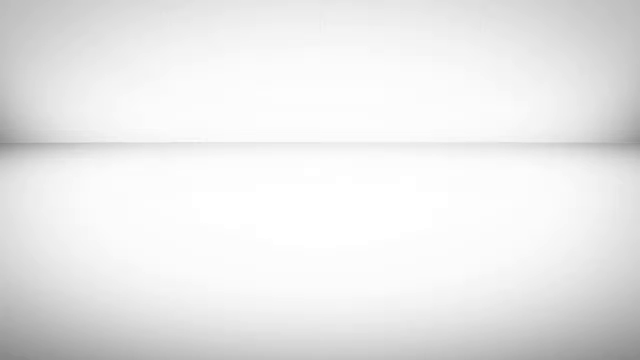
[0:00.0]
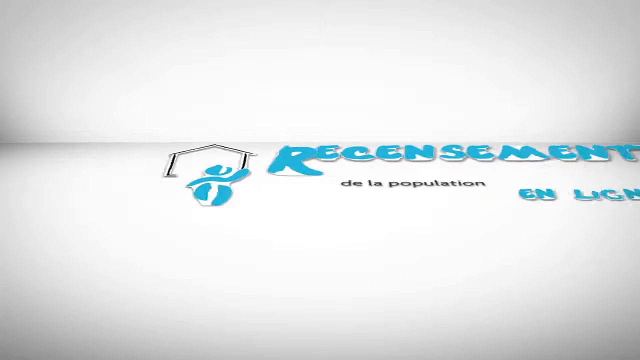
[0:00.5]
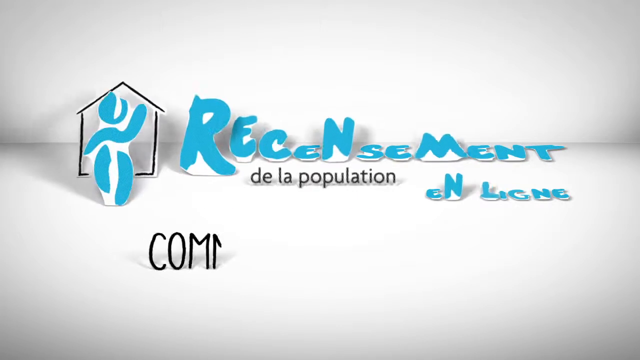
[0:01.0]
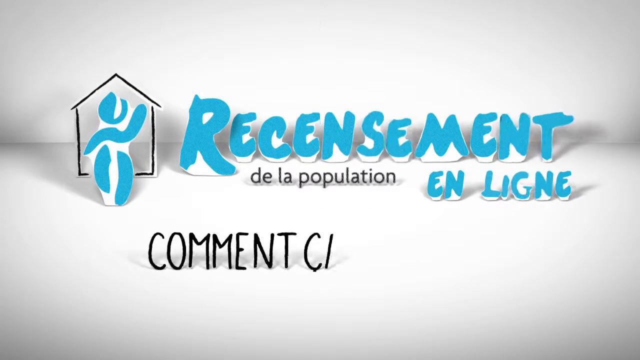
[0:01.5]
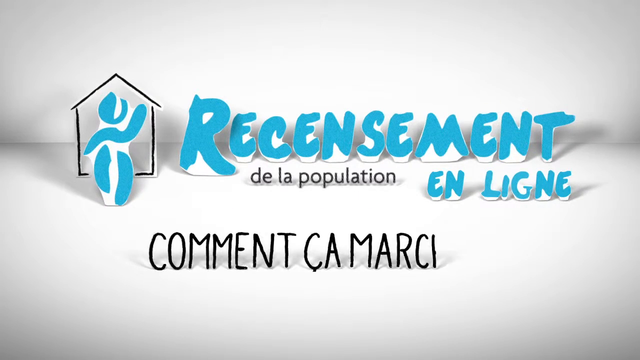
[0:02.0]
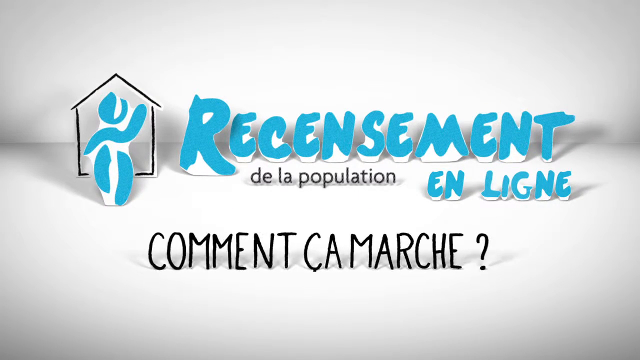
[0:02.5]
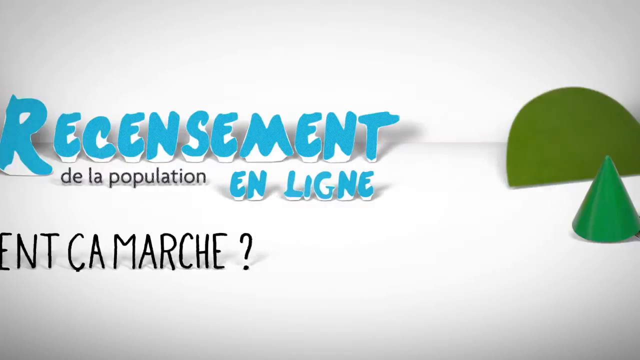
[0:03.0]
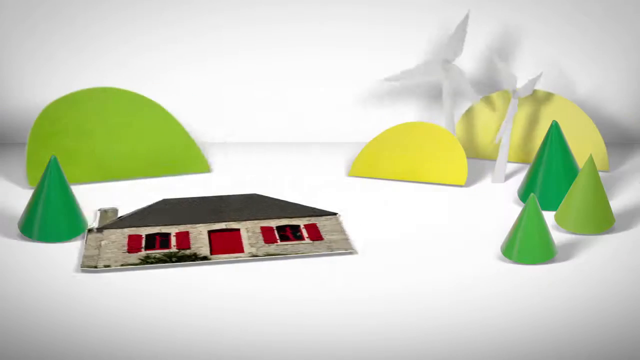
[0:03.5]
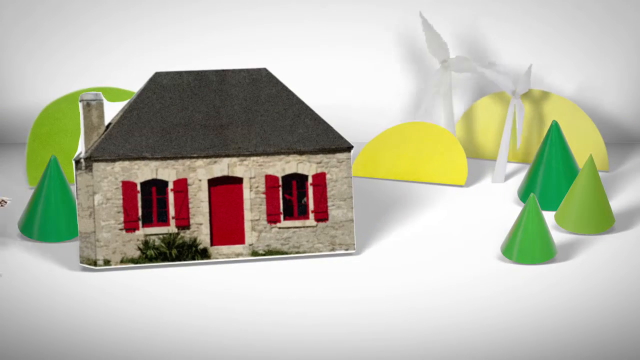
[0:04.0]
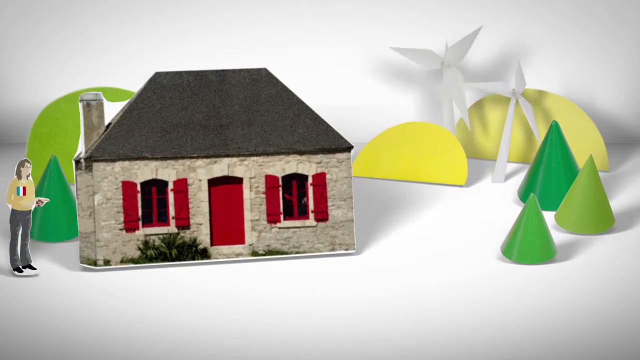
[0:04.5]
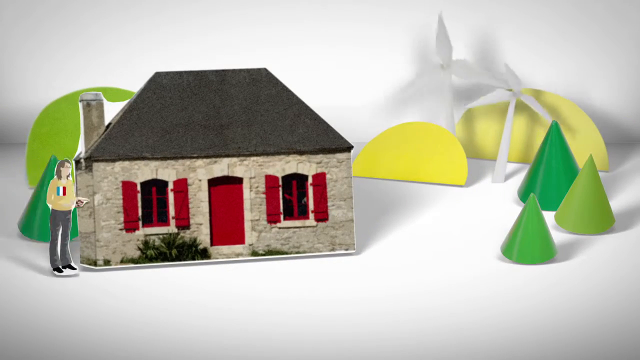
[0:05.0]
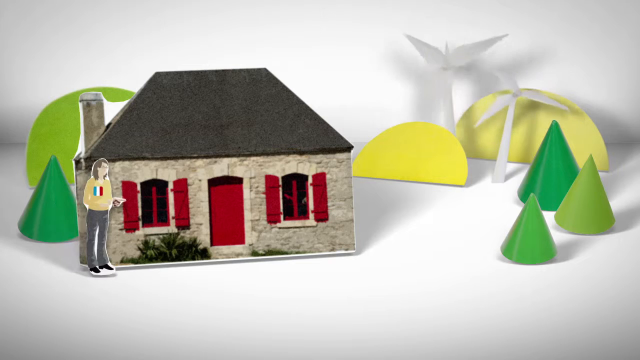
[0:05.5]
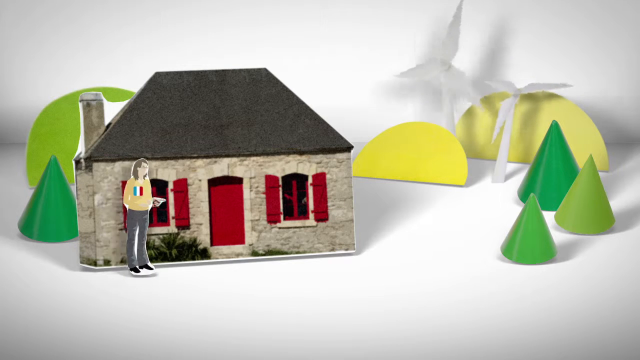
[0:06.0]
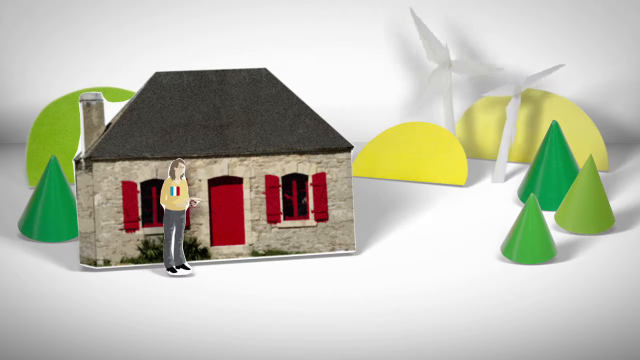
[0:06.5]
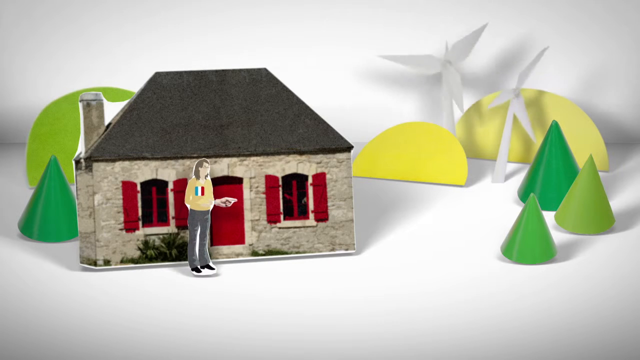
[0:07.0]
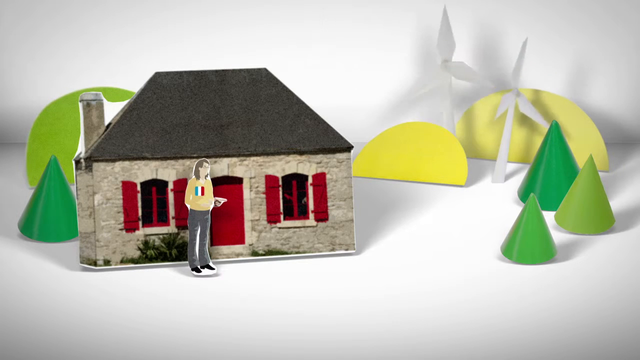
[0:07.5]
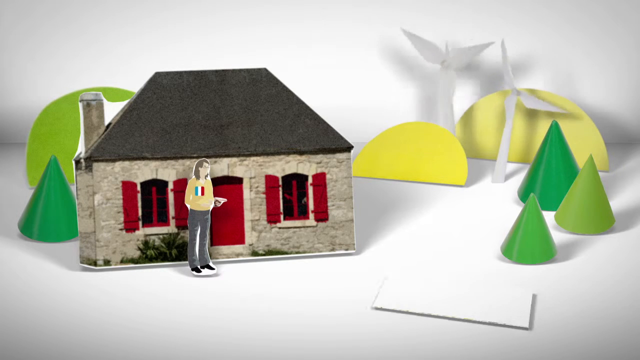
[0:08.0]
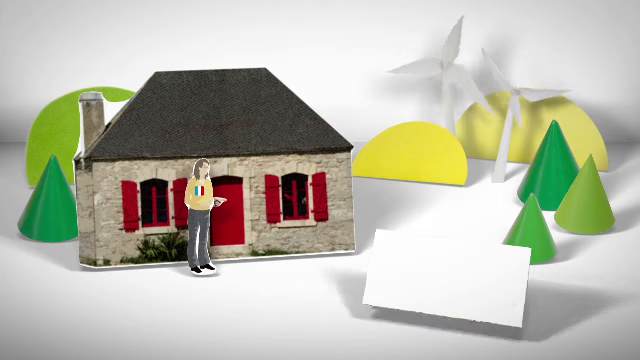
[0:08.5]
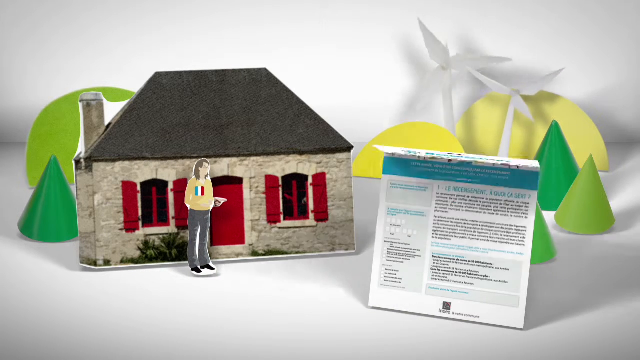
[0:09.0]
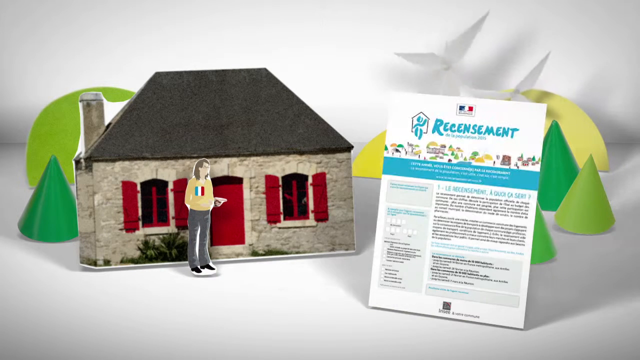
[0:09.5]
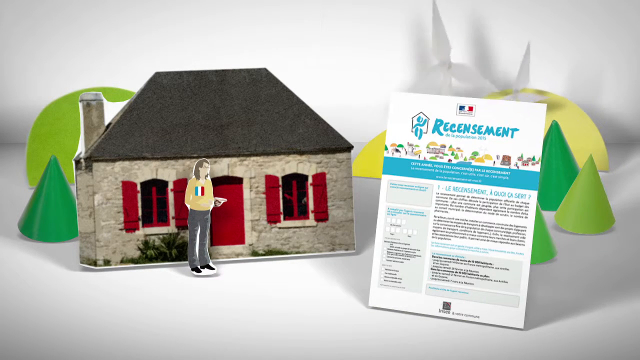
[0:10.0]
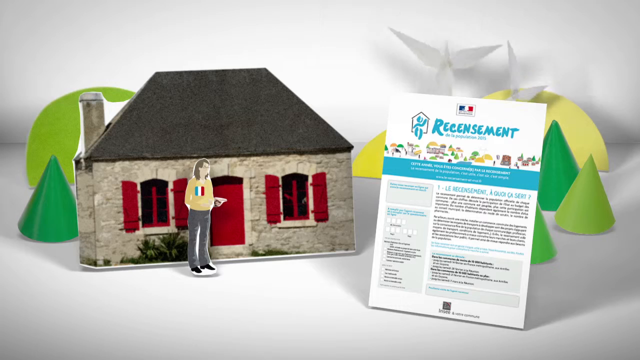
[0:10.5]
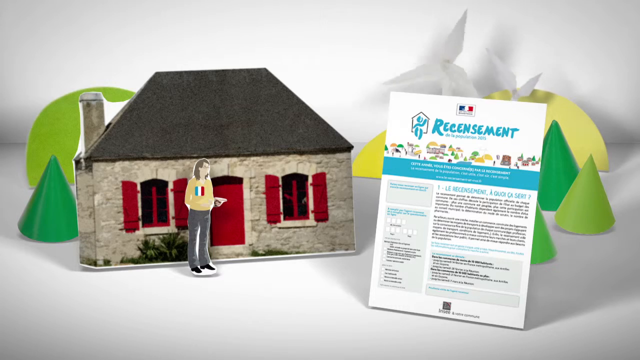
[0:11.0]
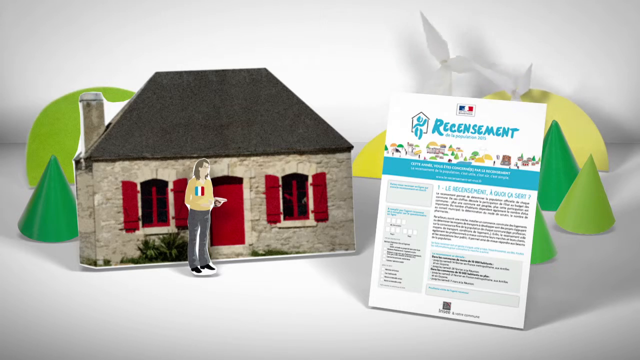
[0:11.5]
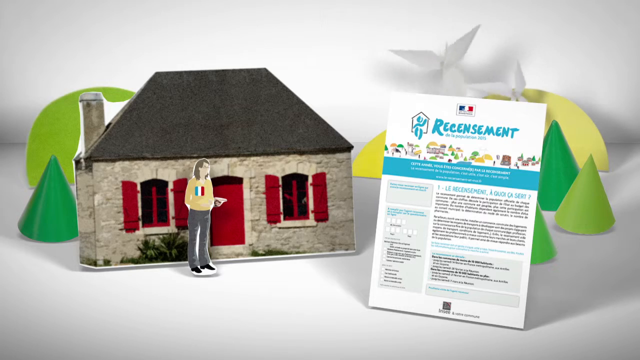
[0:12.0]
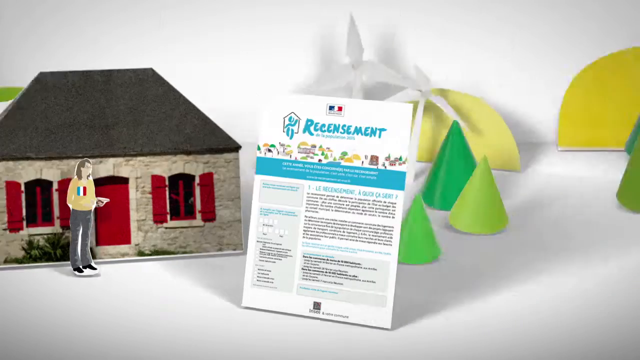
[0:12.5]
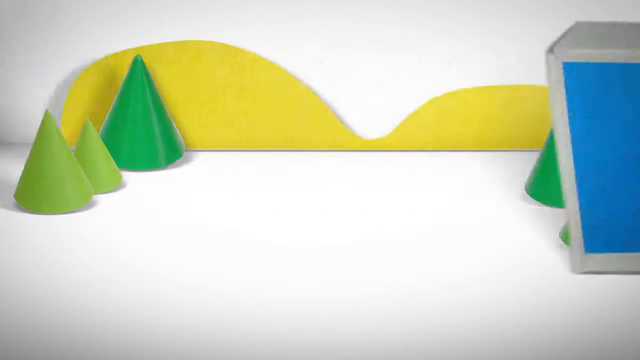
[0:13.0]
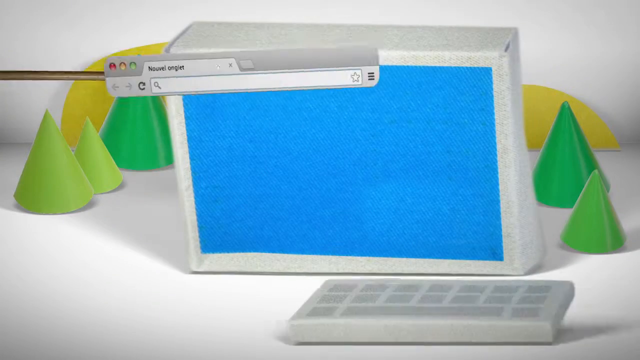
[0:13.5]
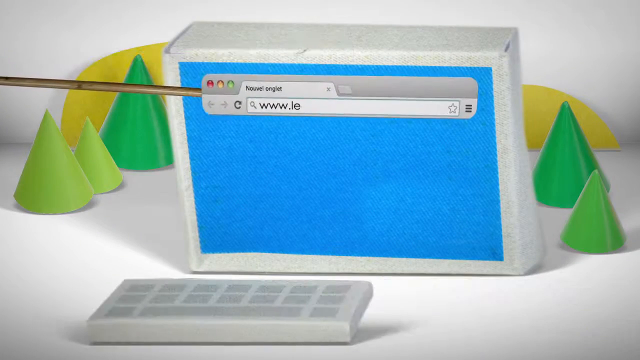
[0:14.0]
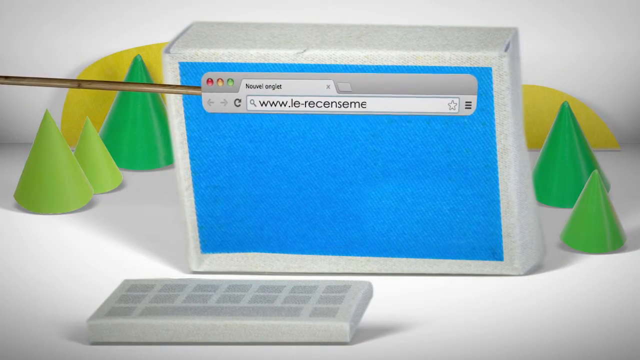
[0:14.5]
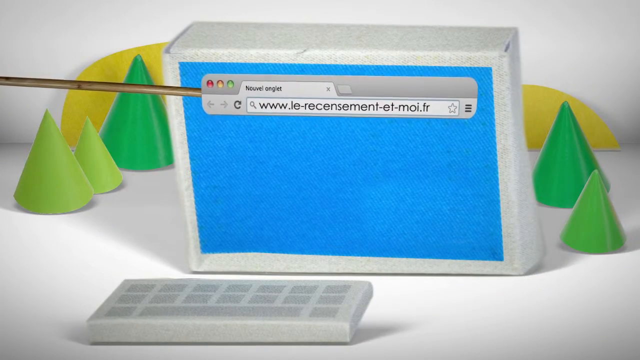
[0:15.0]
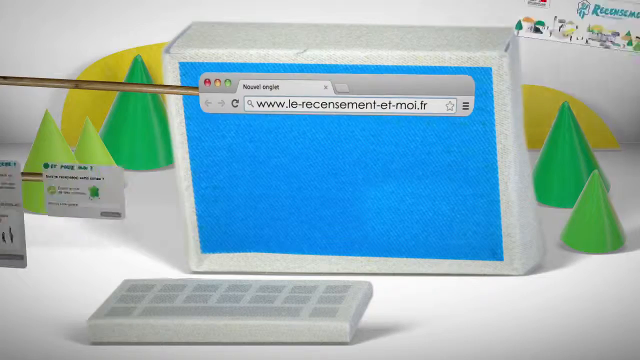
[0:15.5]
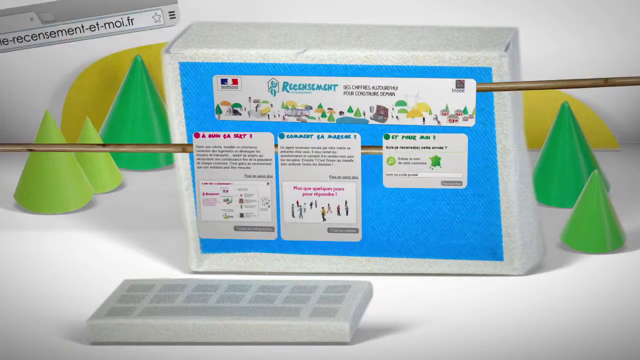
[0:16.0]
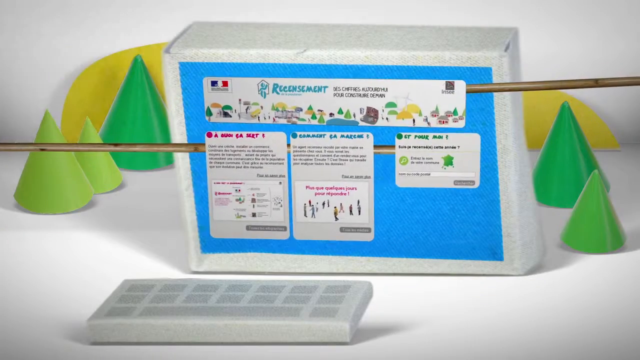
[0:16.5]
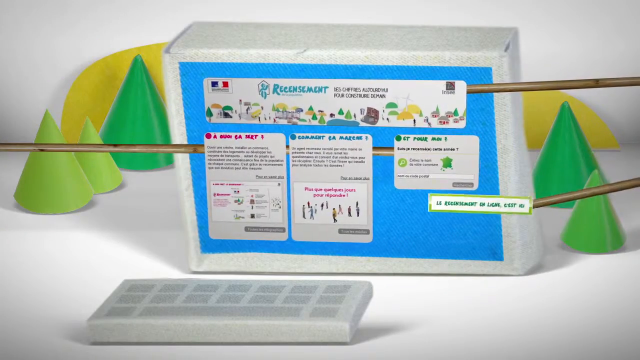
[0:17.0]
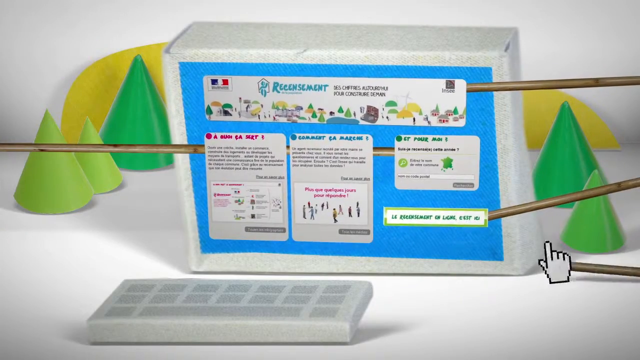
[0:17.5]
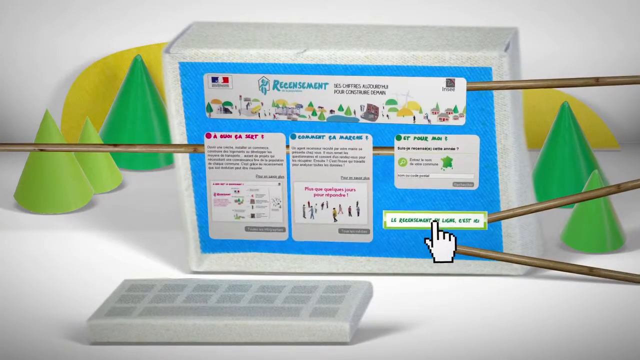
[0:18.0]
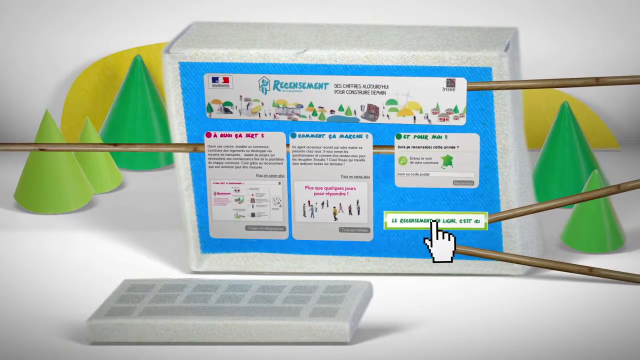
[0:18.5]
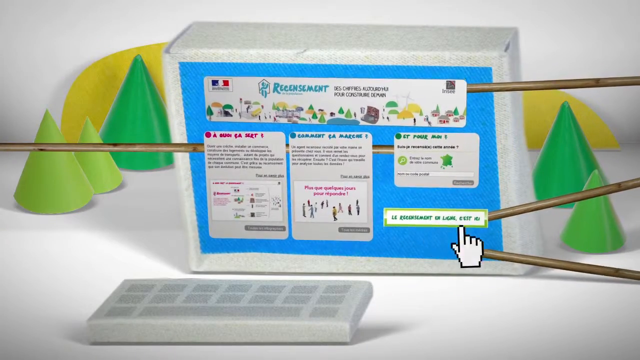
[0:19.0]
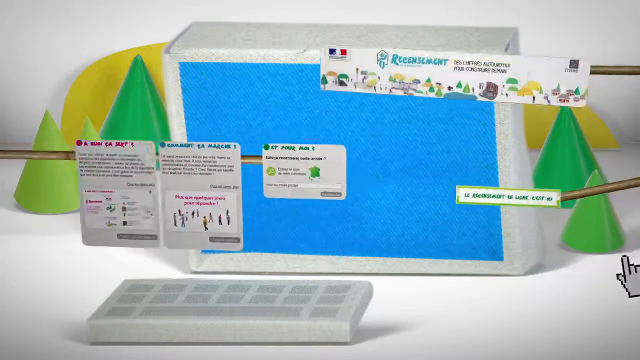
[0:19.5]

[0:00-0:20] A presentation opens with a title in French in blue text, a subtitle in black text, and an icon of a house with what looks like a child inside it. The style is kind of a paper cutout design. The next scene is a kind of paper diorama of a person in front of a house, which looks like a one-story house with an attic space and a chimney, with some trees in the background. The person has what looks like maybe a French flag on their shirt. The person knocks on the door, and a sheet of paper unfolds with some information and the same title as the beginning of the video. Next comes a computer screen made out of a 3D box, with pieces of a website showing up, indicating the website for the same information source.